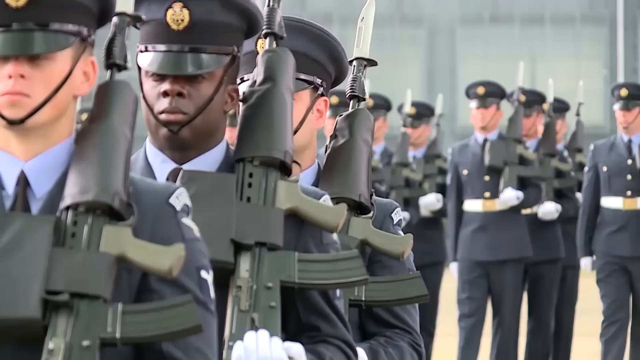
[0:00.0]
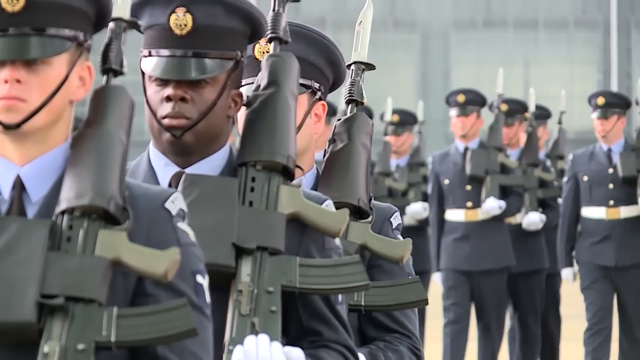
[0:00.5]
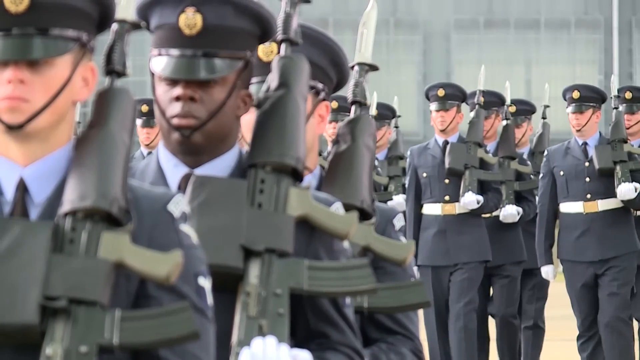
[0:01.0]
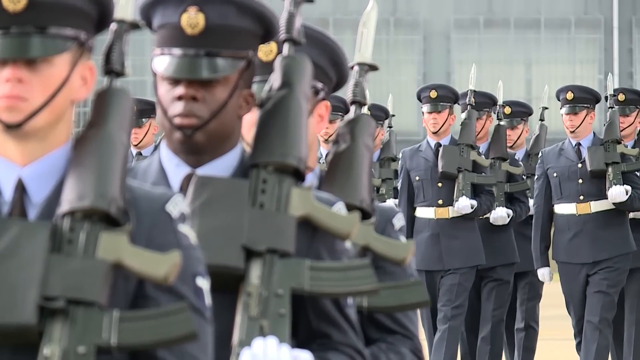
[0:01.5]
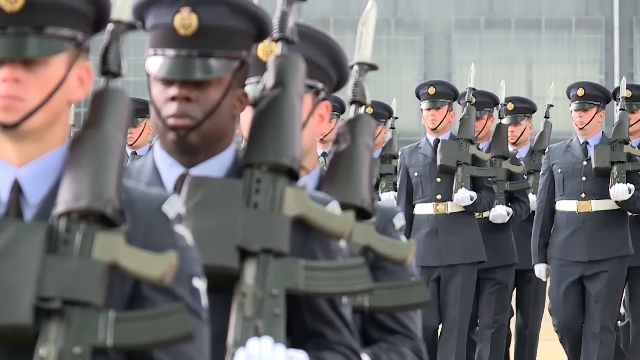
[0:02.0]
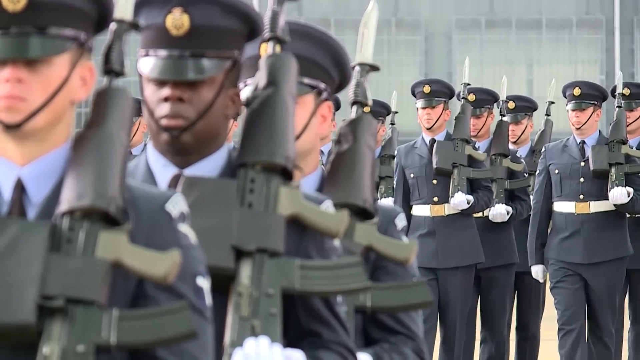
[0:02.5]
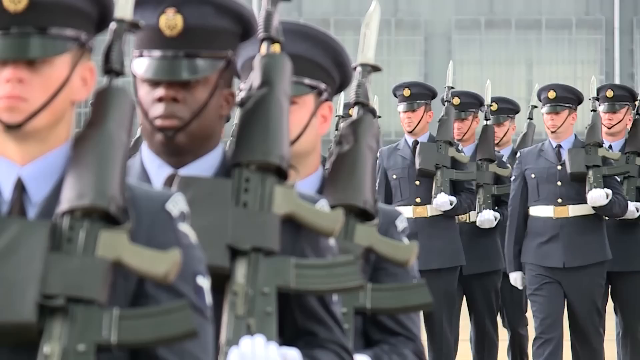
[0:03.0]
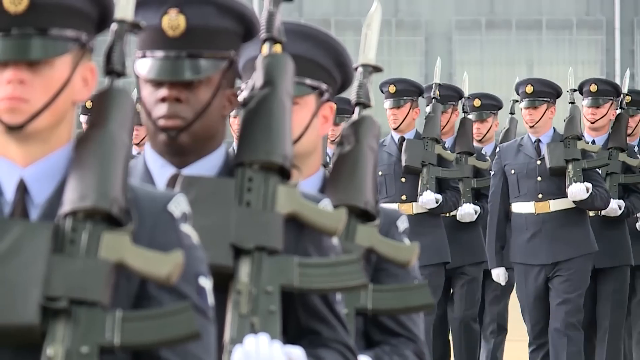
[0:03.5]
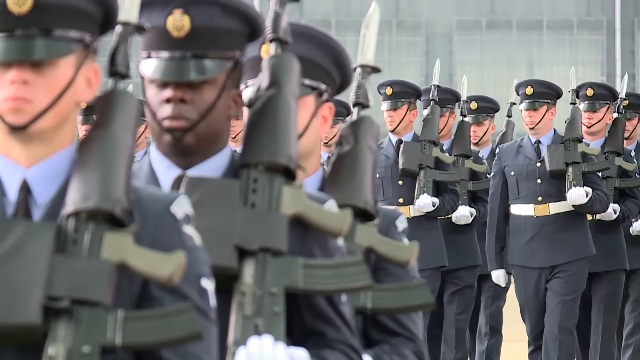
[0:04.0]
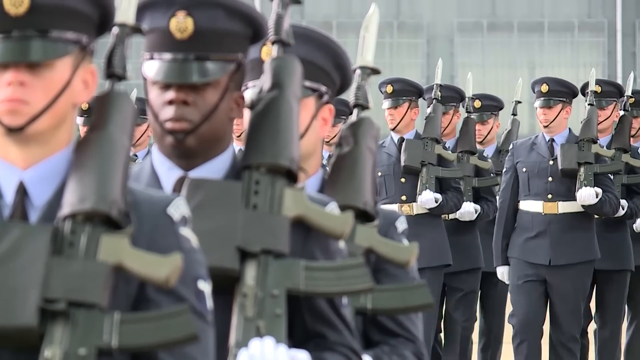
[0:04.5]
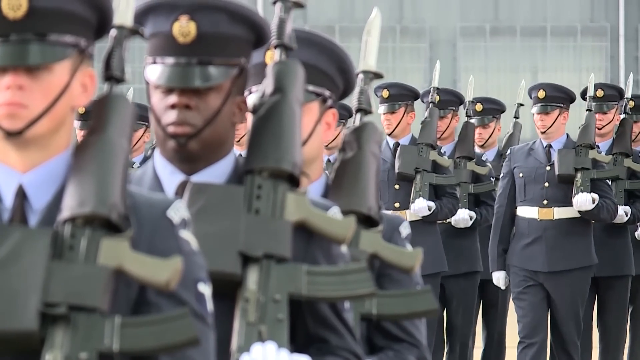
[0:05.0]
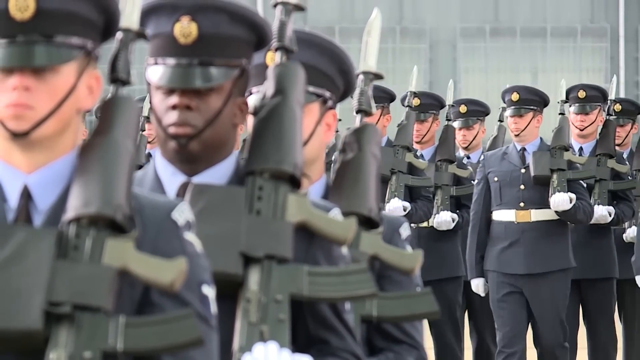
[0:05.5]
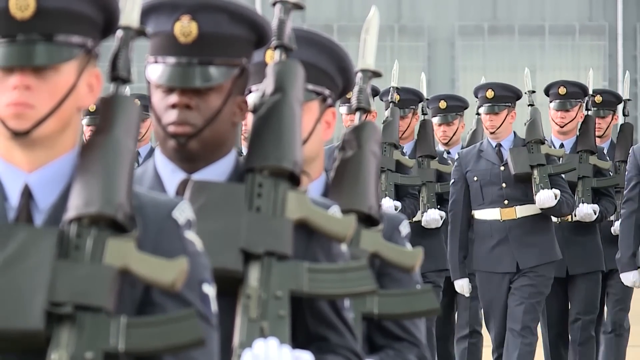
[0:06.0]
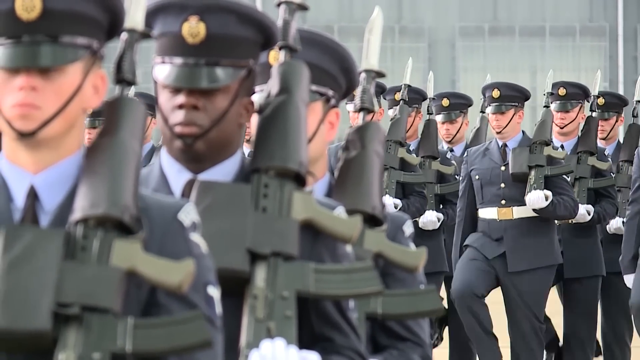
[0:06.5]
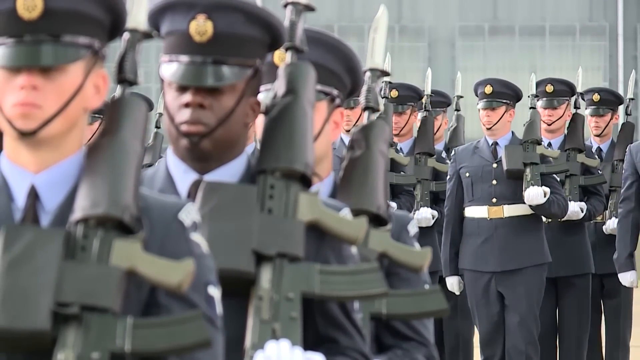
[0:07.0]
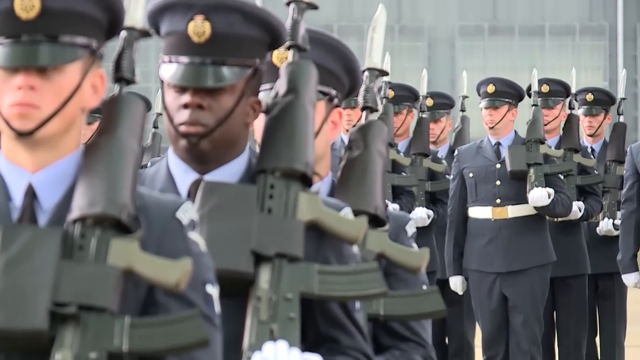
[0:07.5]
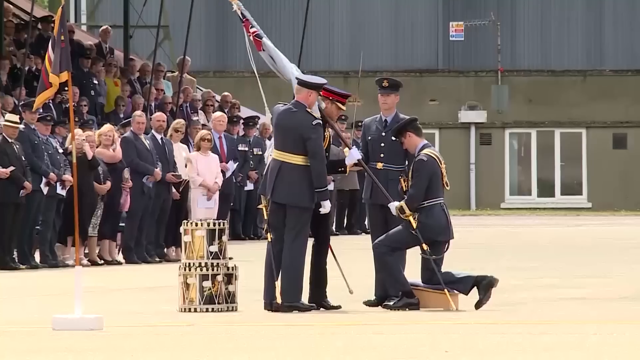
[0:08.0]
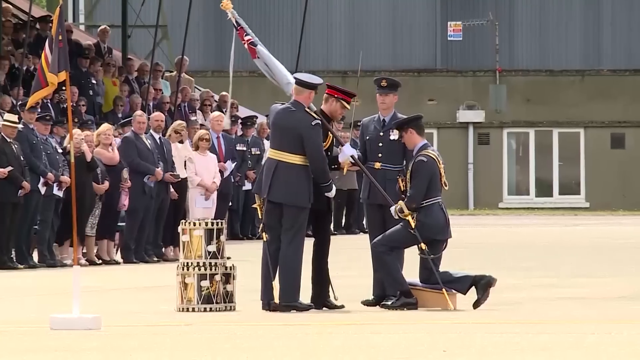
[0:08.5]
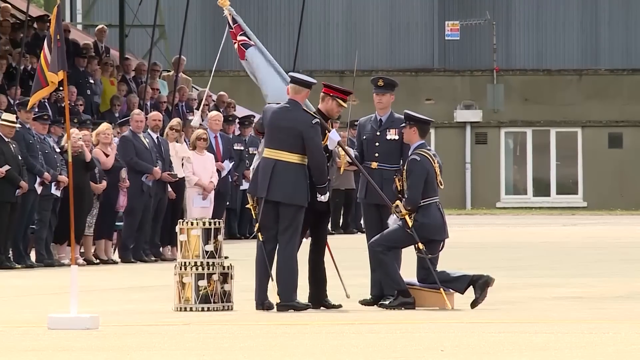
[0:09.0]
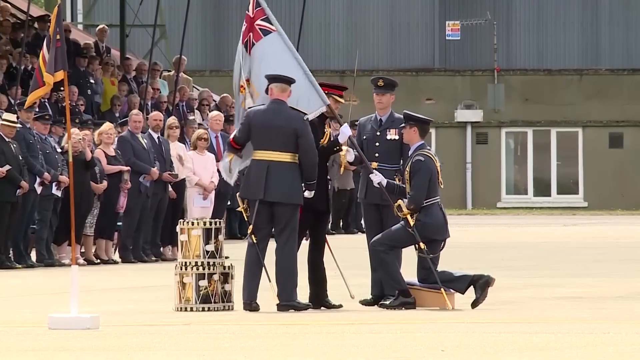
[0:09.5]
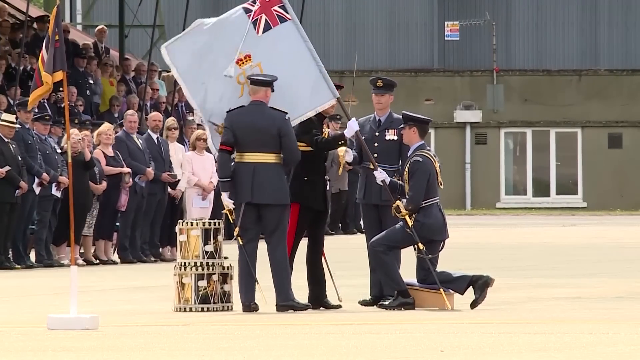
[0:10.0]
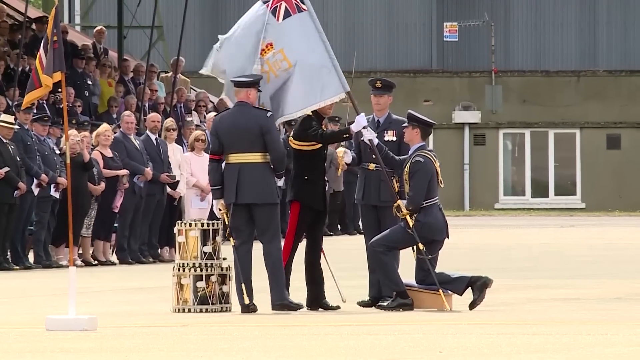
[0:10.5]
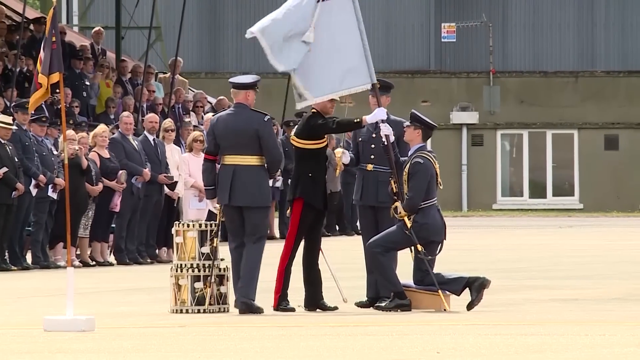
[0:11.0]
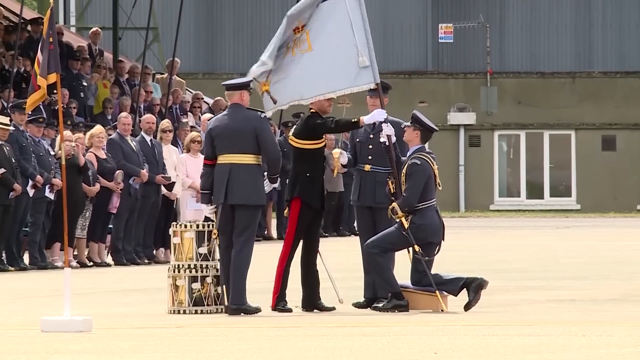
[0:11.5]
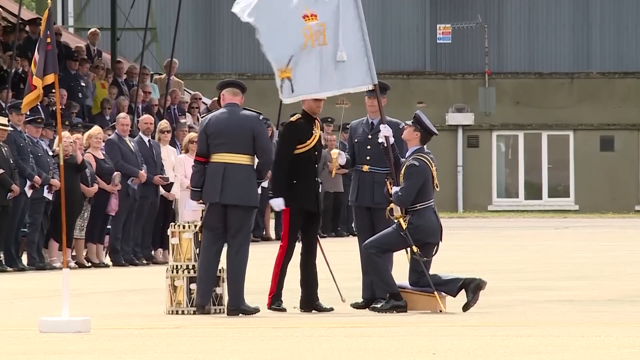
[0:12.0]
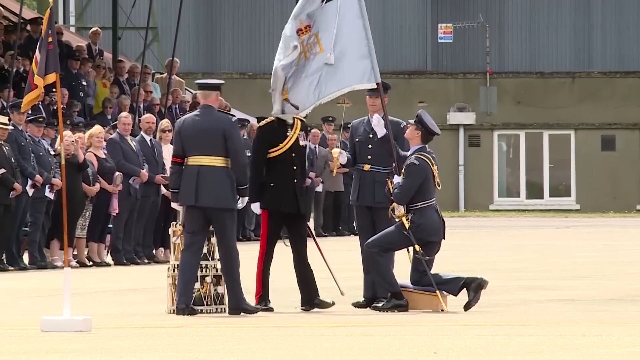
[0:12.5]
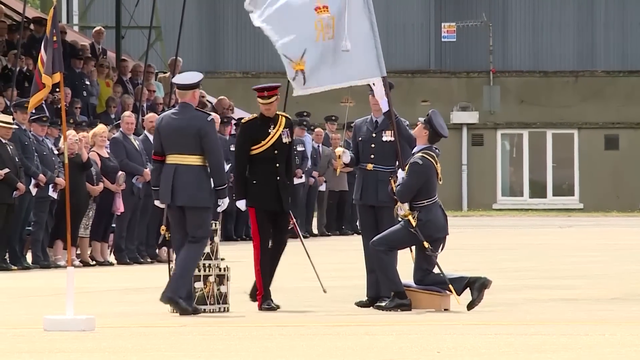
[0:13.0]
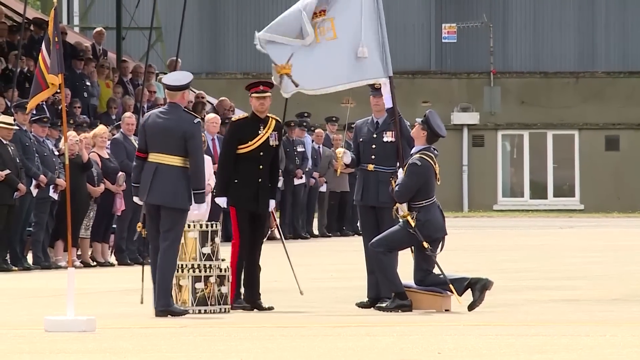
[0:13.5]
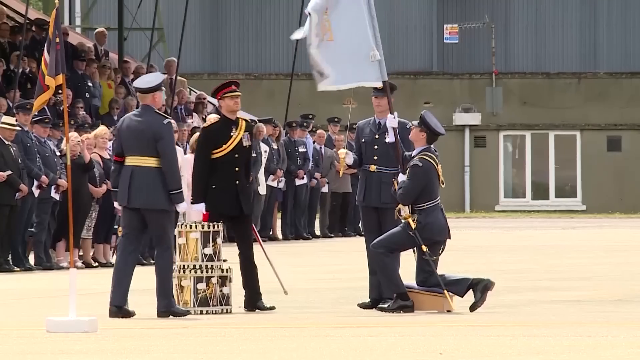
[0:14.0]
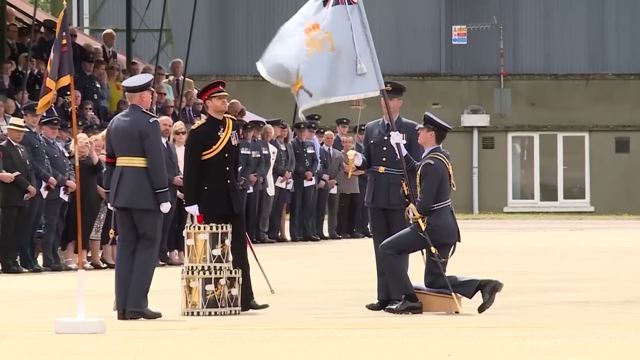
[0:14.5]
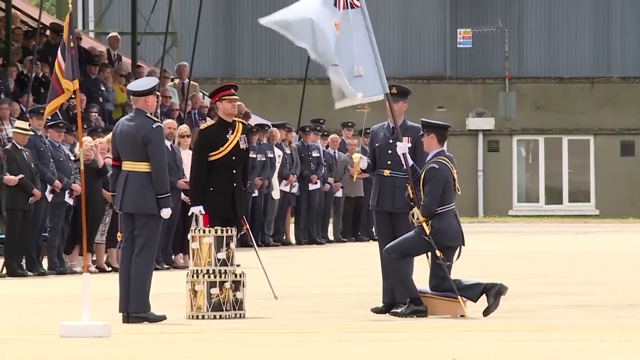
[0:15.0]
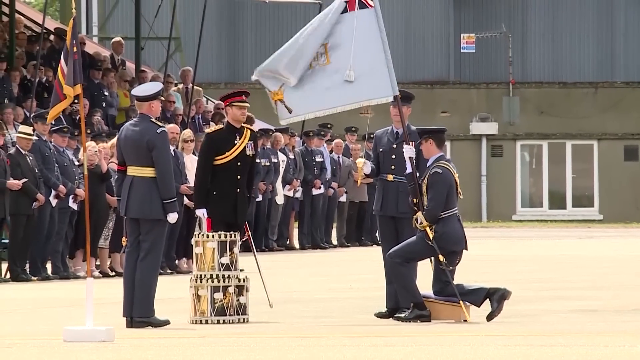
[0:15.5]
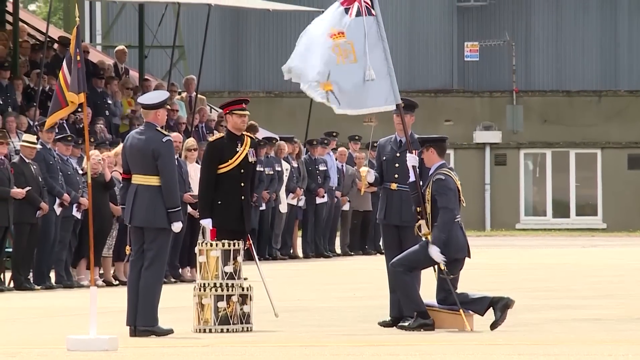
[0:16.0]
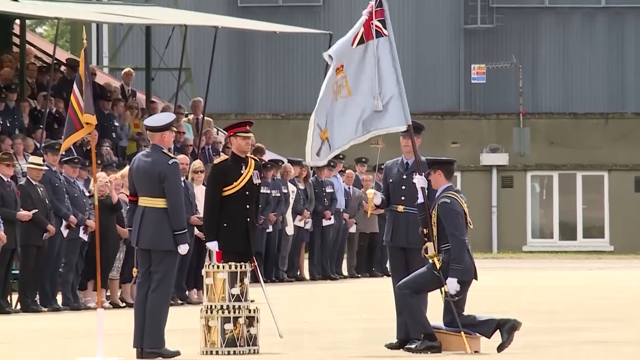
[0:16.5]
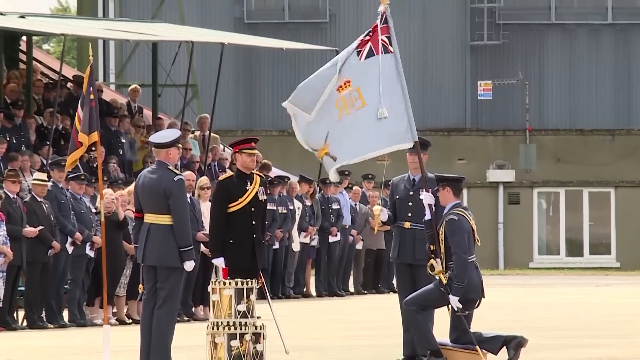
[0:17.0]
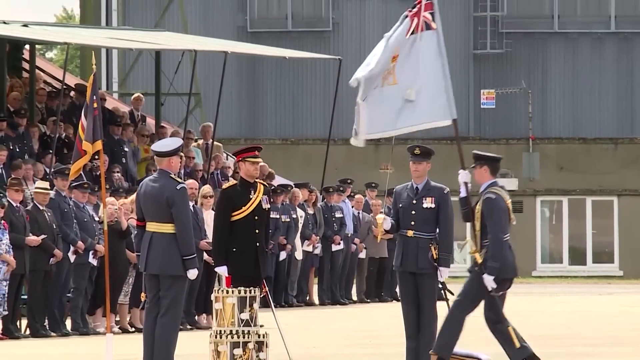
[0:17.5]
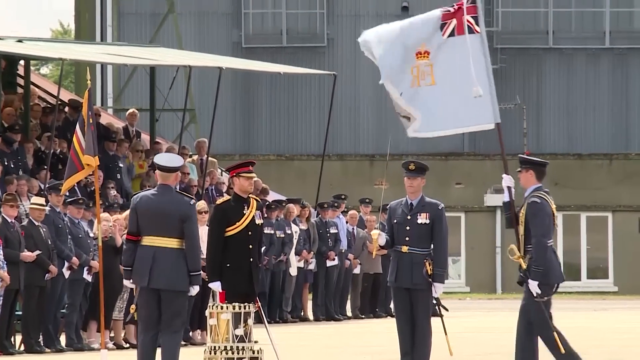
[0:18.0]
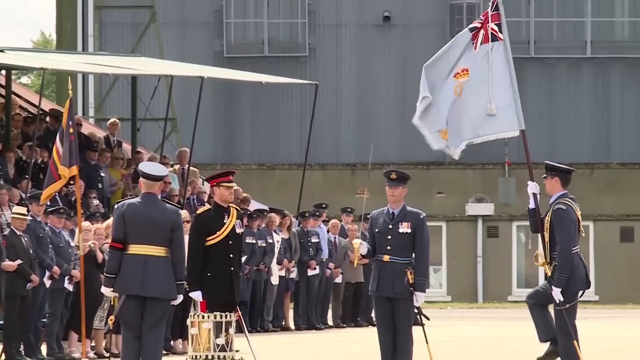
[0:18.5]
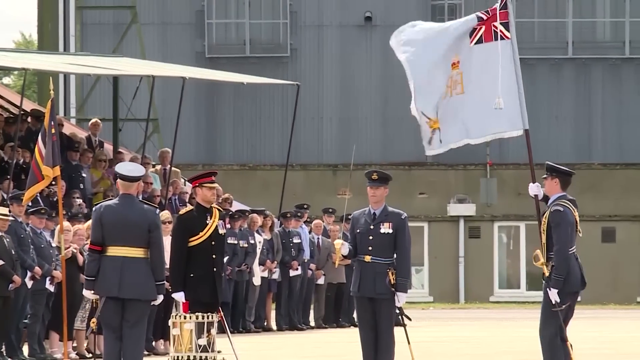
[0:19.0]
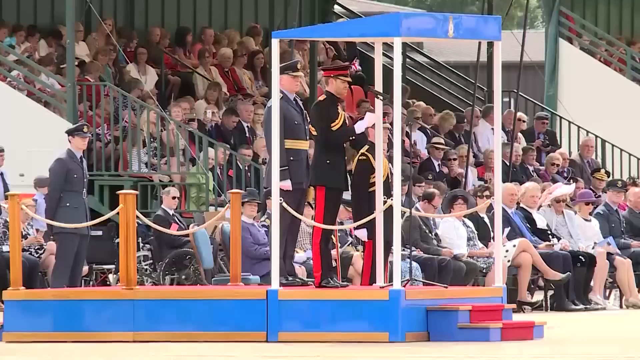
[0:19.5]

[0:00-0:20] A line of soldiers wears blue, army-style suits, each with a big rifle with a dagger on the end over the left shoulder. Three men are in the foreground, with the top halves of their bodies and their faces visible; in the background, seven slightly blurred men are stood in front of a grey-looking building. The men behind are in three rows and march slowly, while the three men in the foreground stay still. They stop and do a big double step. Then Prince Harry hands a flag to another man who is knelt on a kind of wooden box with a cushion, at what is some kind of military ceremony. In the background there is a row of men and women; most people wear black suits, and the women wear either white or black. Various flags and two drums are on the floor. Prince Harry wears a black military outfit with red stripes down the sides of his trousers.